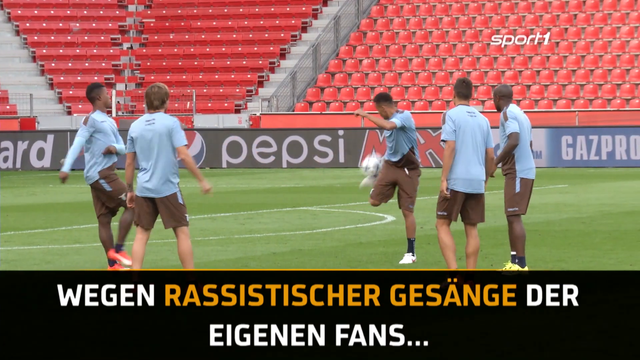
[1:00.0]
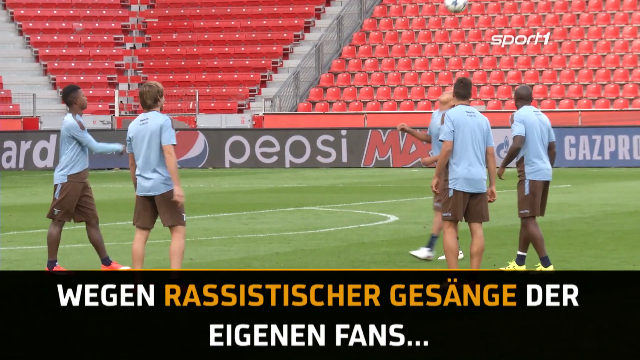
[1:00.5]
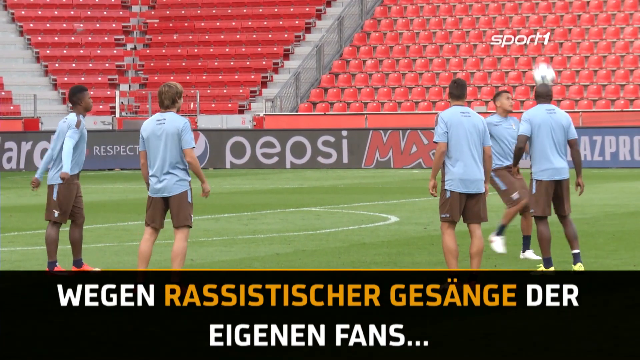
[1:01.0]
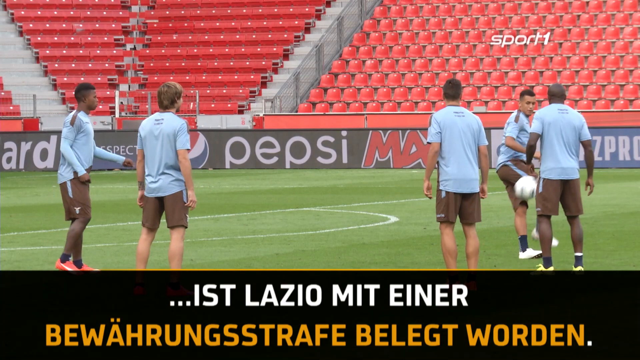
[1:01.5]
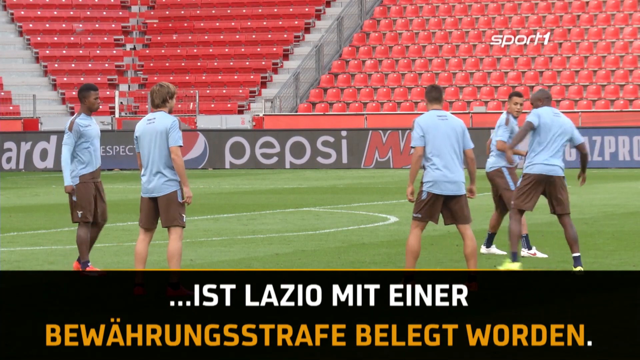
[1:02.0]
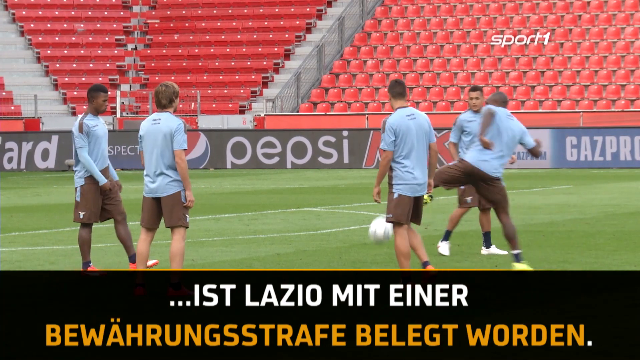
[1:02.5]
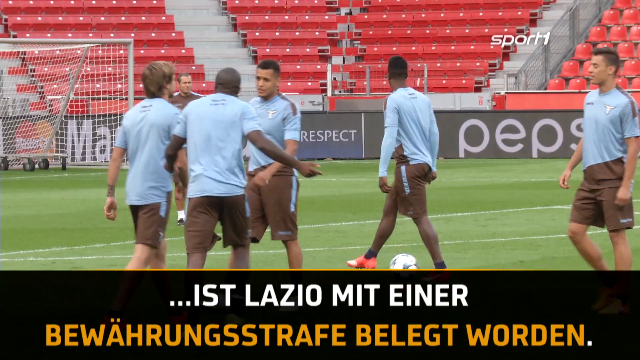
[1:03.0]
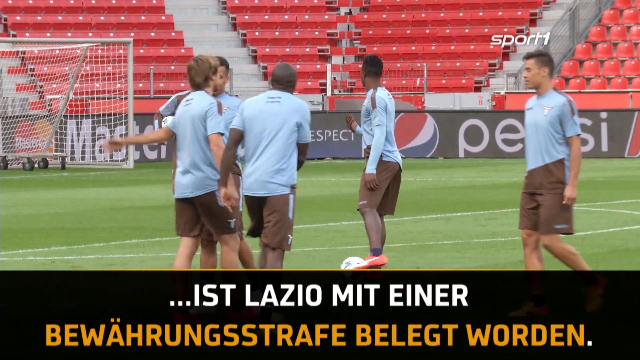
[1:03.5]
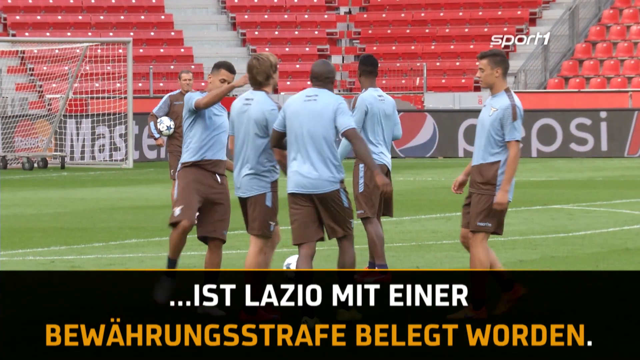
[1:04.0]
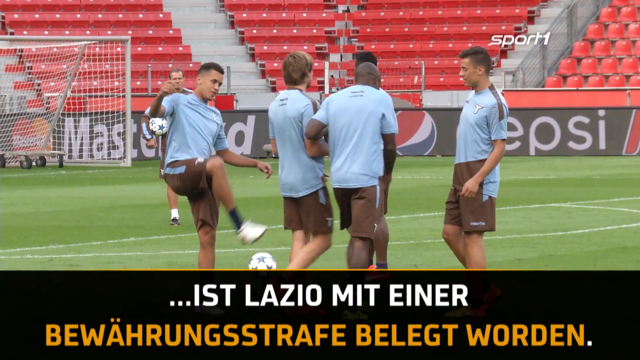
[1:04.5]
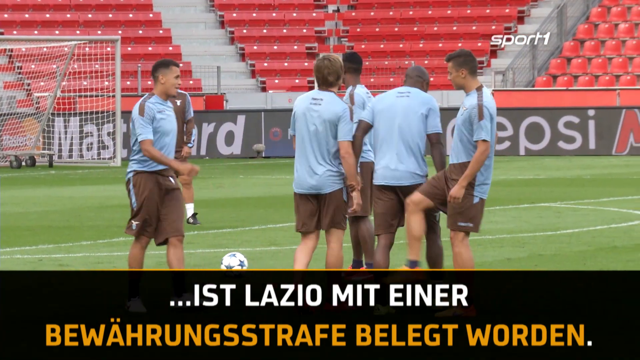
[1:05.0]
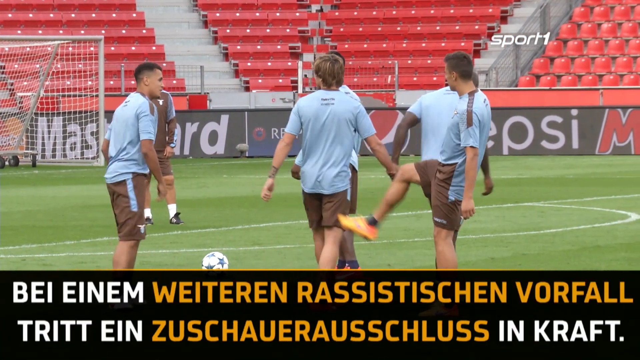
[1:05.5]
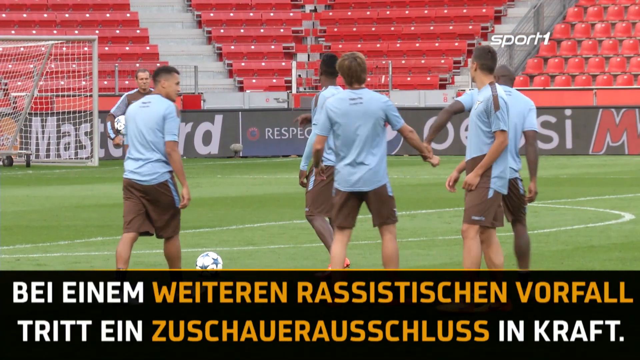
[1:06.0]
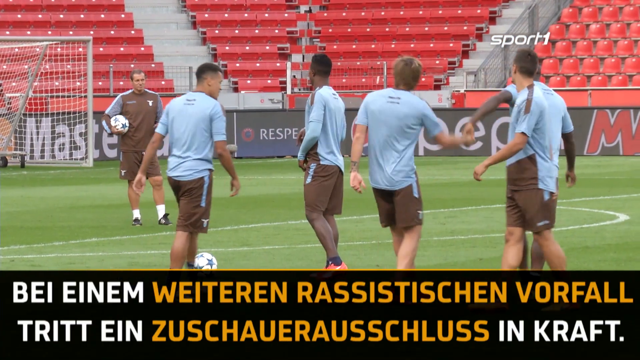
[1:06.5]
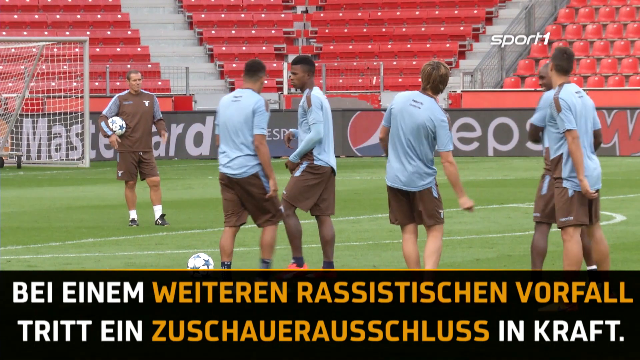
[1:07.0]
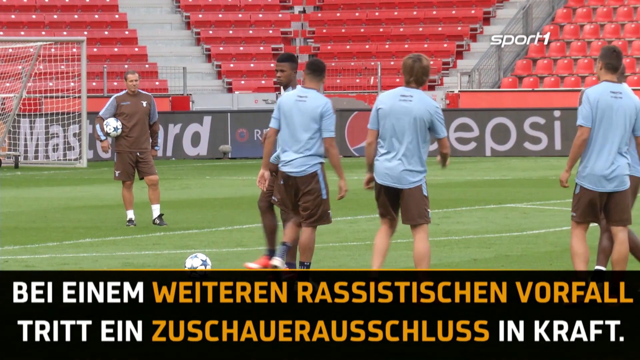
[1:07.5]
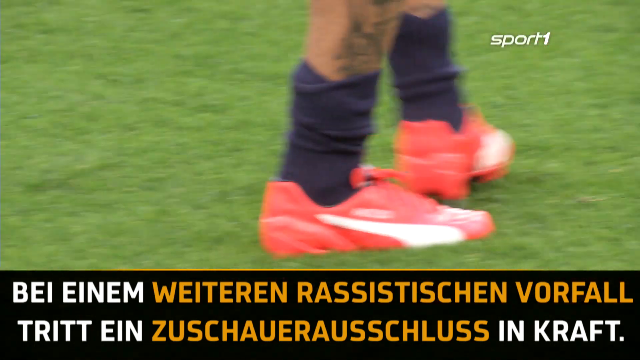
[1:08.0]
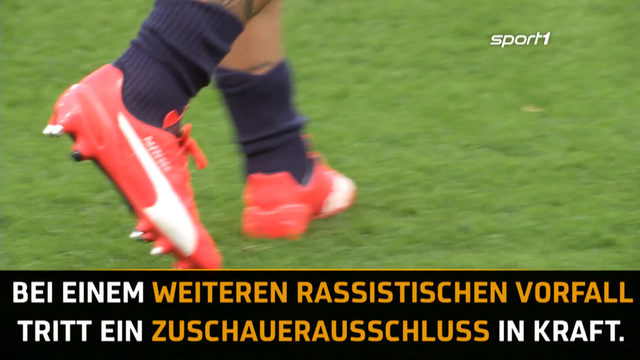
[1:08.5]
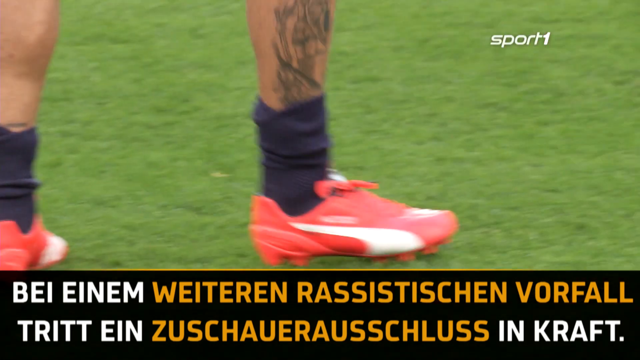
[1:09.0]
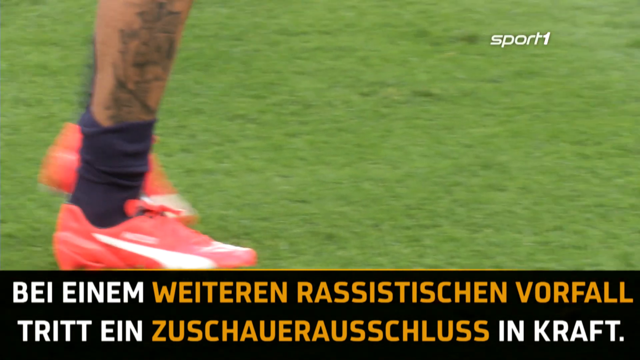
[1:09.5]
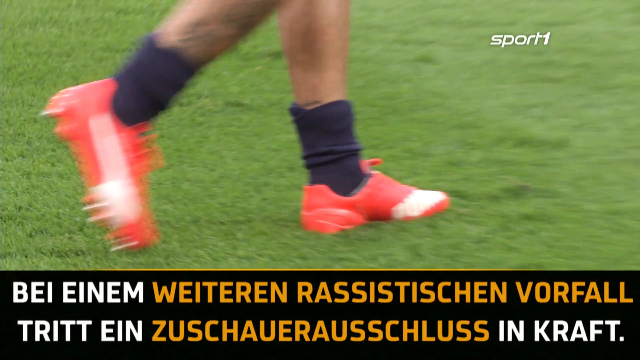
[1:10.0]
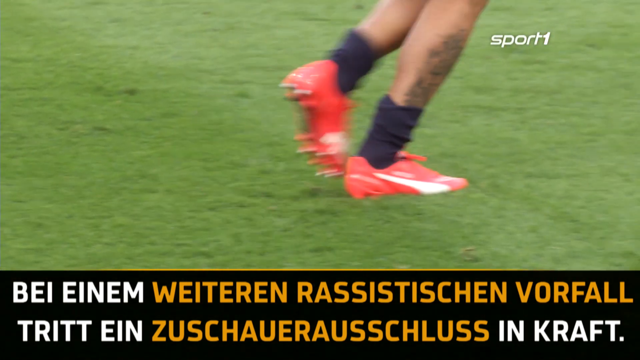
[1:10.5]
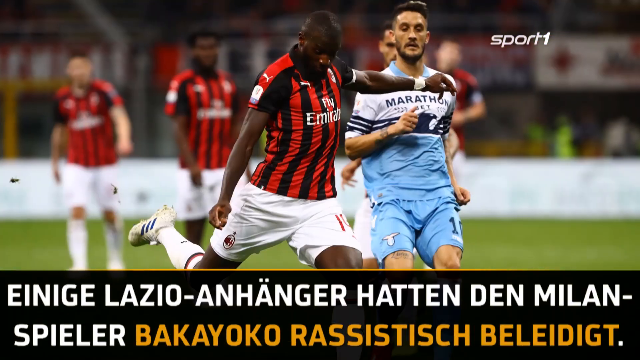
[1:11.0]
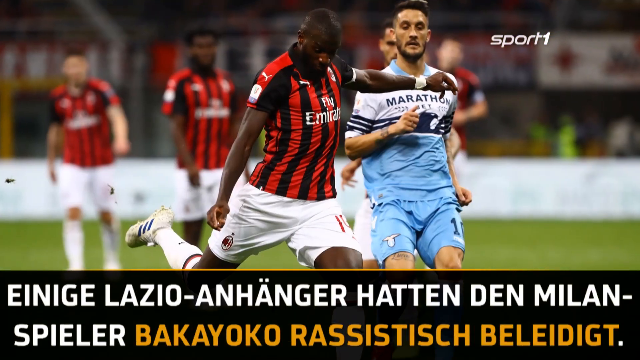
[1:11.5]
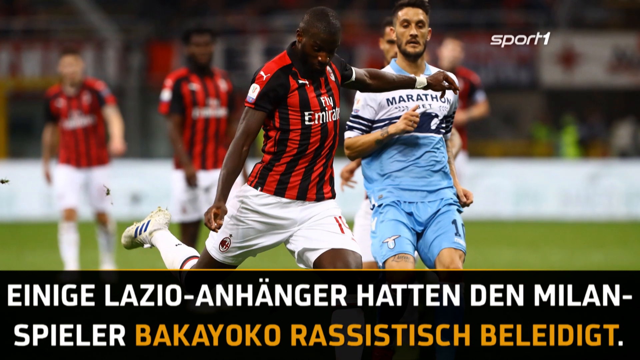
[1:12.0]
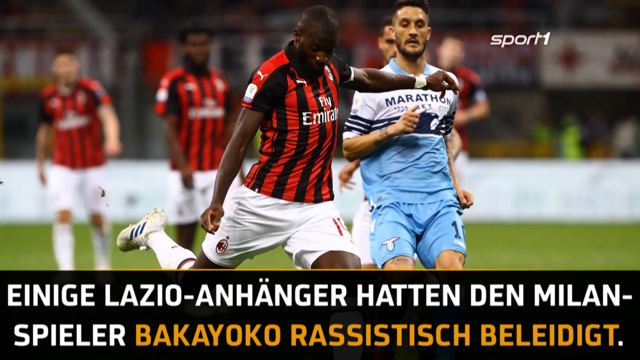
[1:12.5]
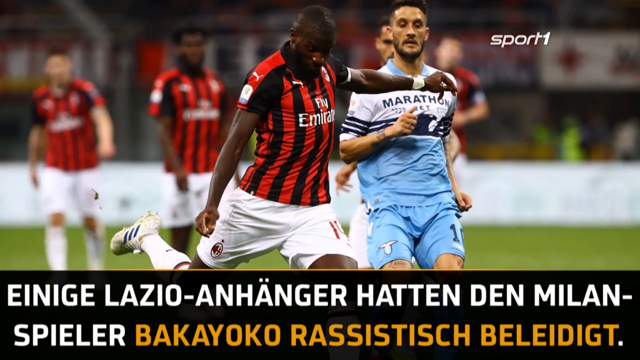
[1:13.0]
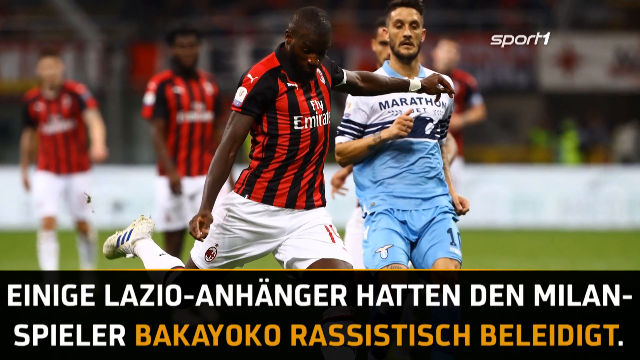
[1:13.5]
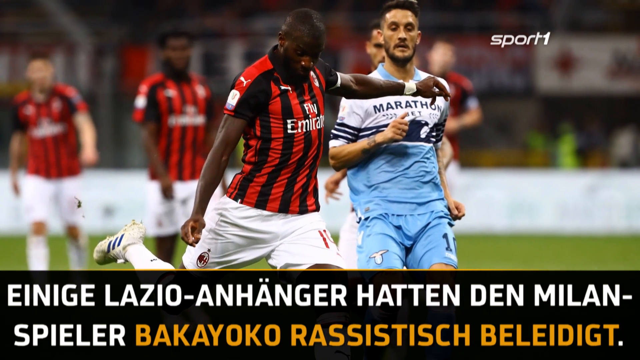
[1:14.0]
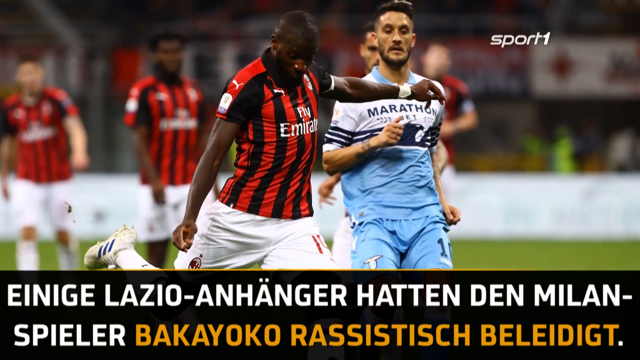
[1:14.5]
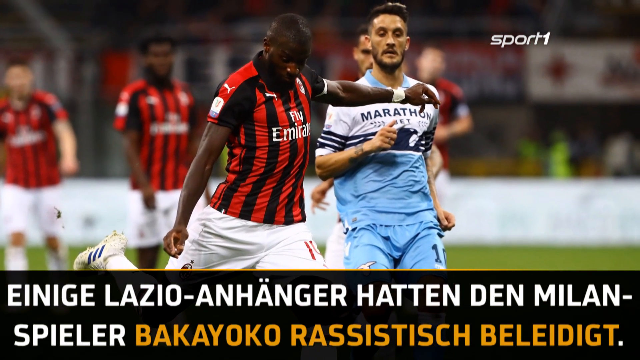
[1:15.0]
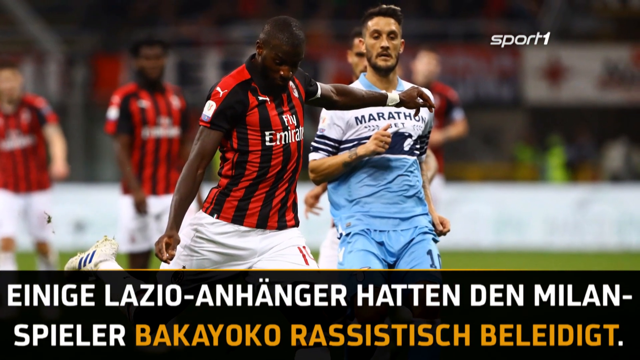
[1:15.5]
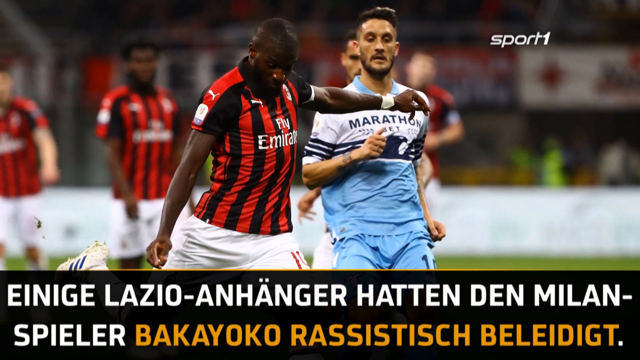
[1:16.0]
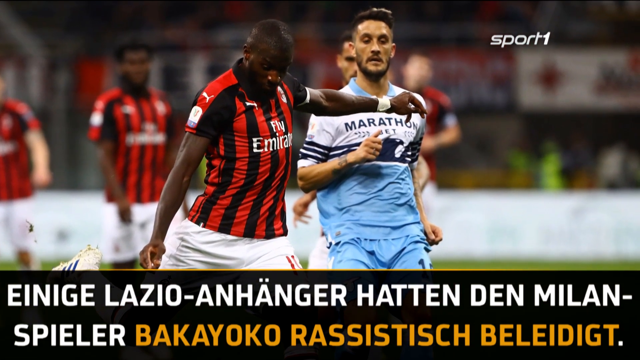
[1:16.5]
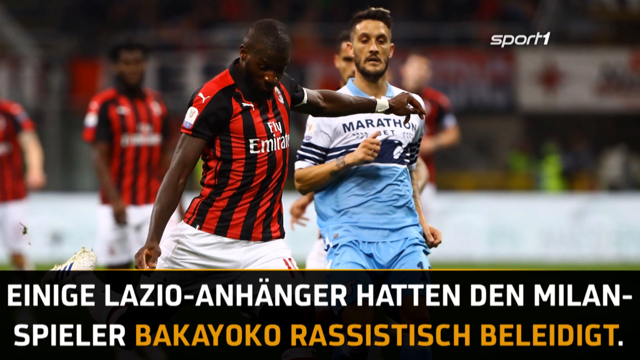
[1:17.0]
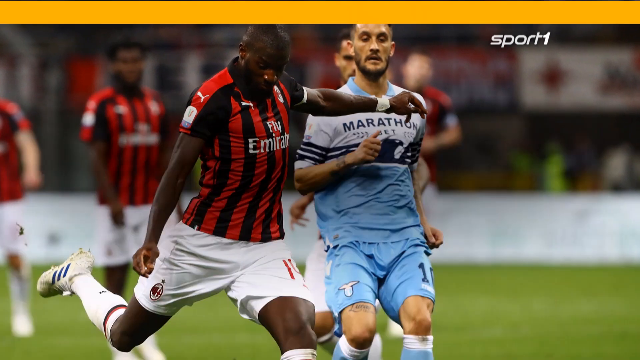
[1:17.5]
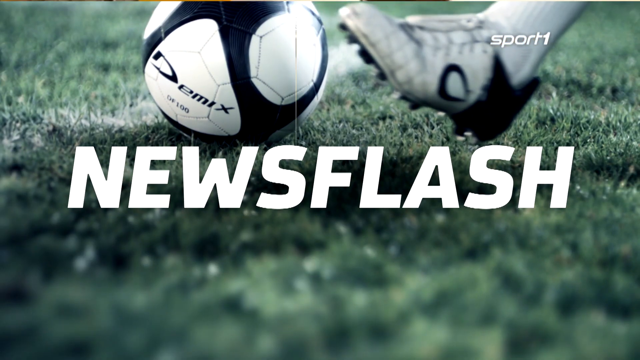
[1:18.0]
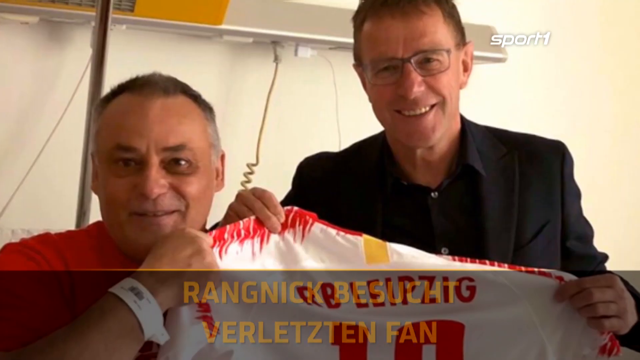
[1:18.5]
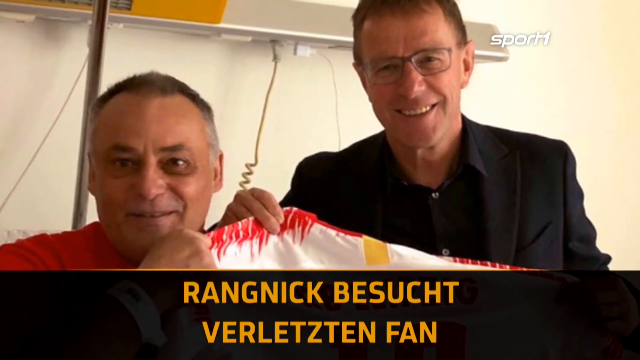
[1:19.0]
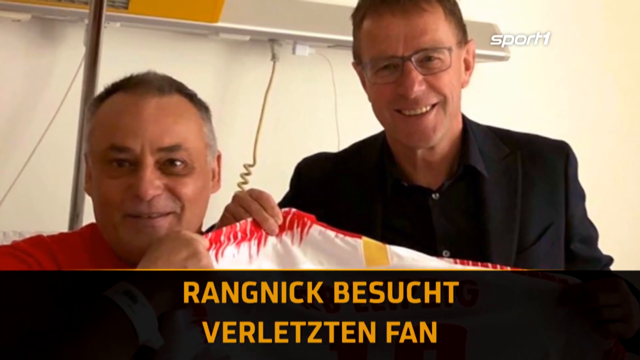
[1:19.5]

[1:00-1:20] The players stand around in a circle, all in light blue short-sleeve shirts and brown shorts. A player in the upper right corner of the frame has trouble handling the soccer ball, and it falls to the ground. Then all the players leave the circle, come together, and seem to jokingly kick each other in the rear. Someone who looks like a coach watches in the background, and they appear to talk to him. The video then zooms in on a player's lower legs, showing his tattooed ankles, bright neon red cleats, and black shin guards as he walks away from the camera. Next, the camera pans in on another still photograph showing a player in a red and black striped jersey and white shorts in the process of kicking a soccer ball, with another player in blue running after him.